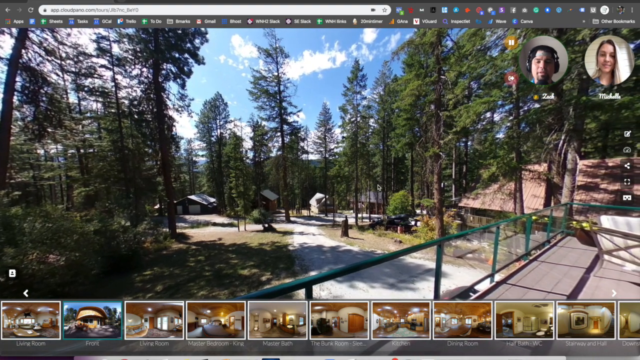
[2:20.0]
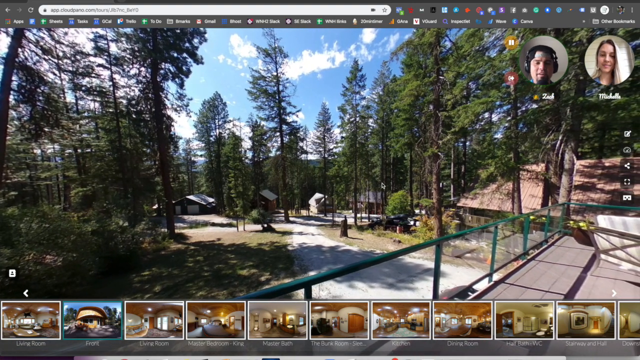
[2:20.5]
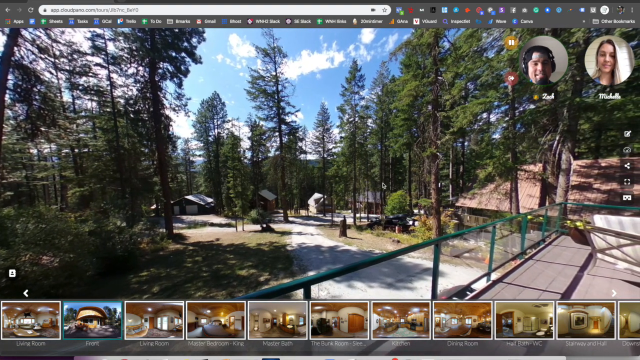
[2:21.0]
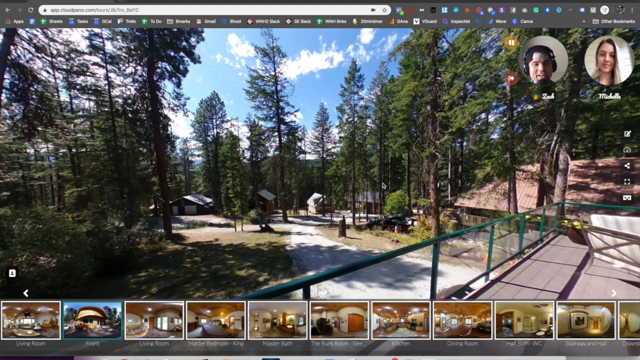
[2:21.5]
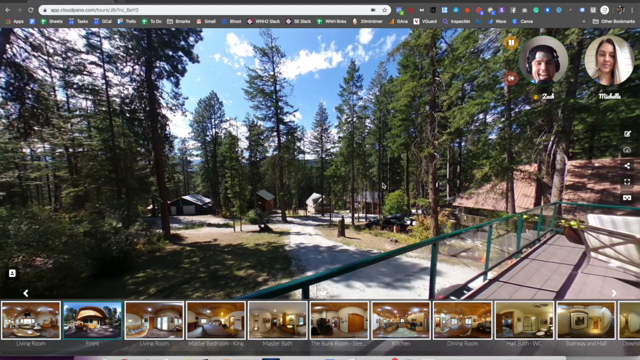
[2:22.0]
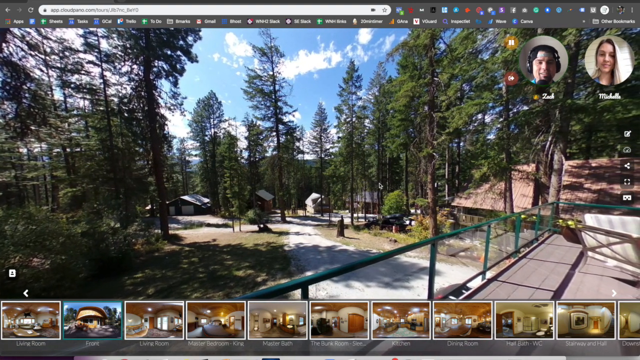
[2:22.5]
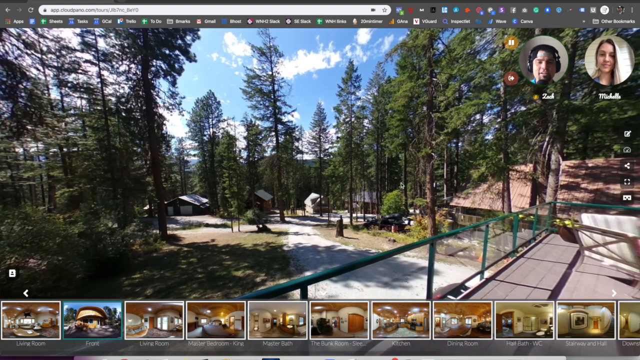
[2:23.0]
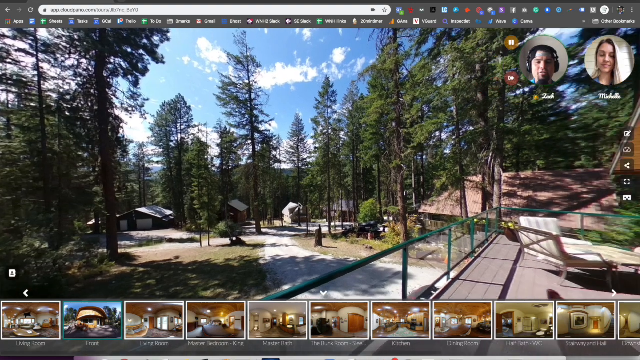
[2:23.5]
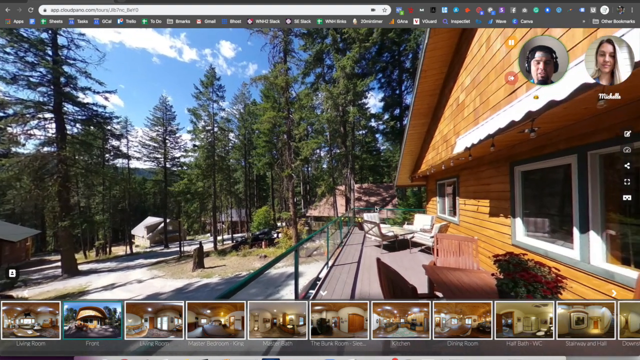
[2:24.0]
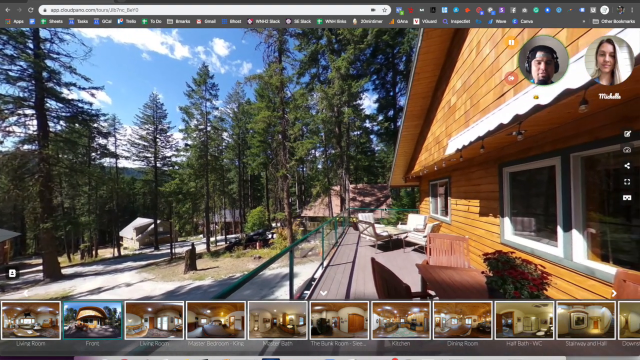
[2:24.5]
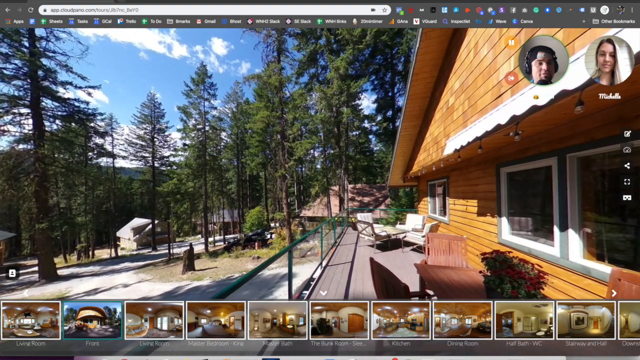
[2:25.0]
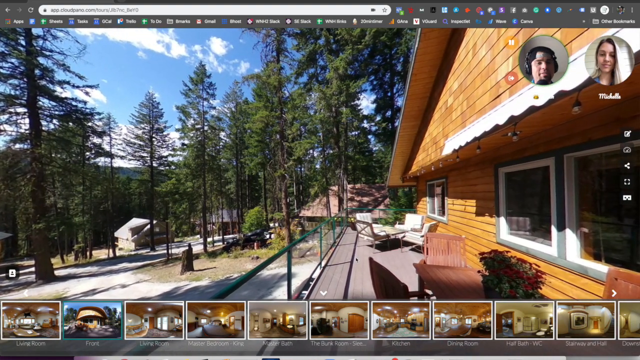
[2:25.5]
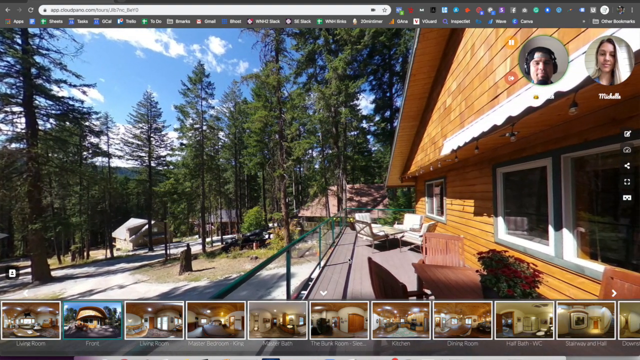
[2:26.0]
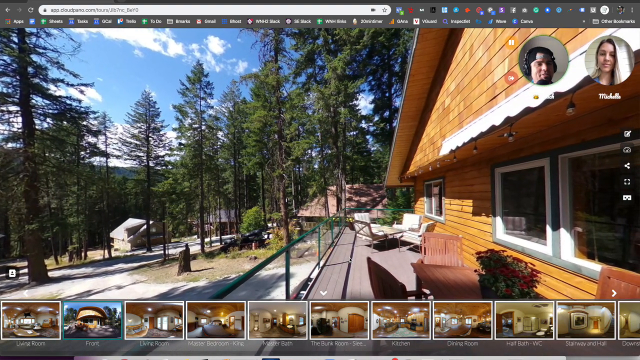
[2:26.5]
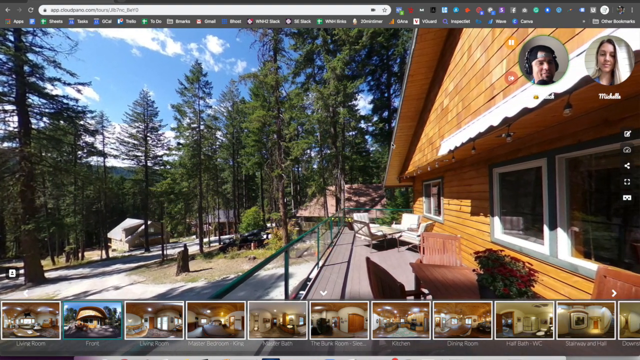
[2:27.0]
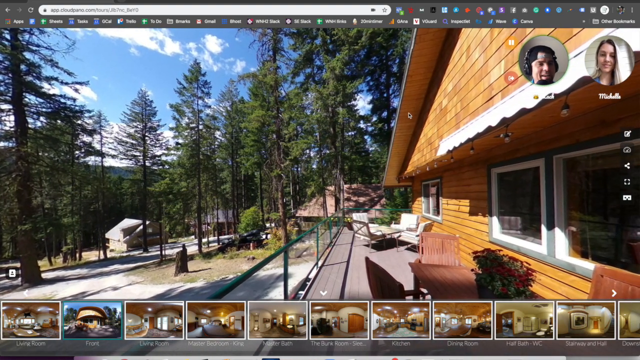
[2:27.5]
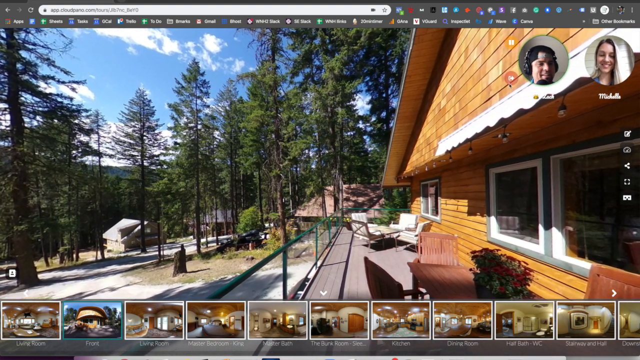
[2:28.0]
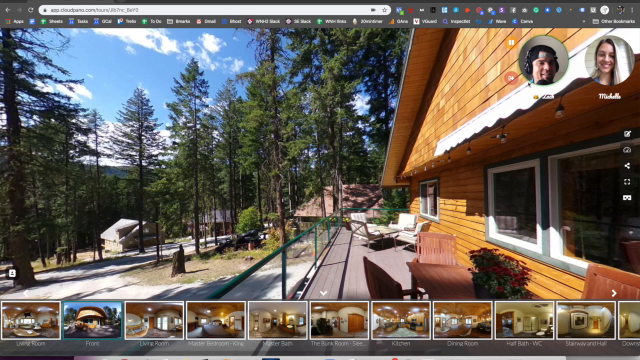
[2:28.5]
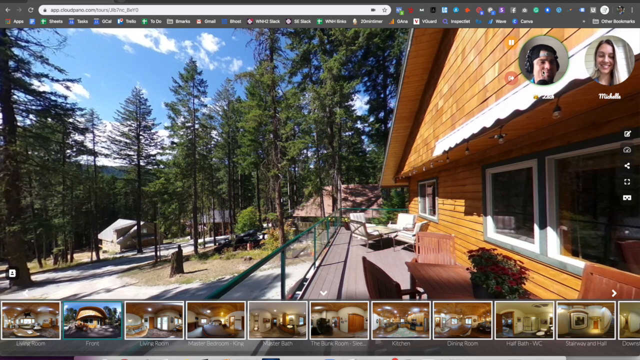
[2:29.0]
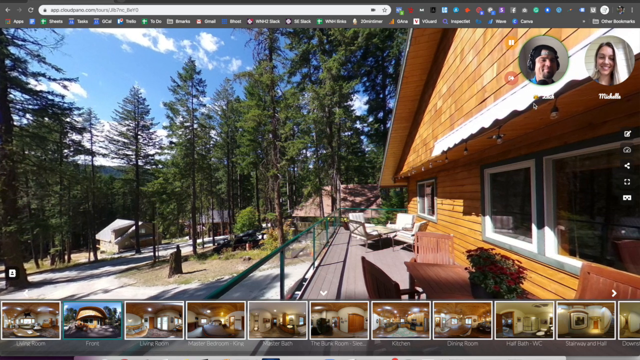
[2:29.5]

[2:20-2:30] A virtual reality game is being played by a man named Zach and a woman named Michelle, whose pictures are in the upper right-hand corner of the game. The view is outside on a porch area of the house. At least five or six, maybe more, neighboring houses are in the background off in the distance, with just their roofs and a few details of each visible. At the bottom is the scroller showing all the different rooms that can be clicked. The house has windows on the outside, and there is a table. Zach is wearing headphones, while no headphones are visible on the girl.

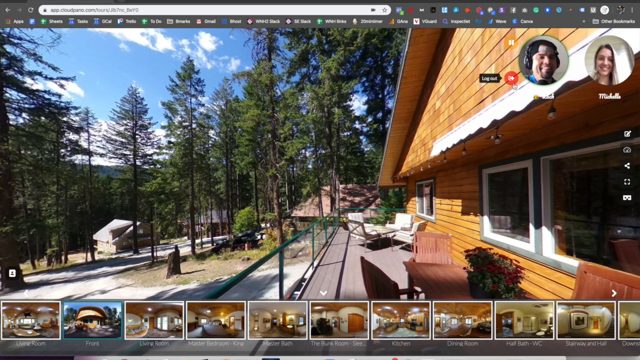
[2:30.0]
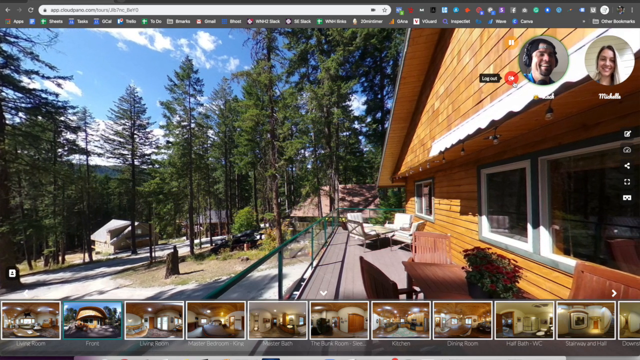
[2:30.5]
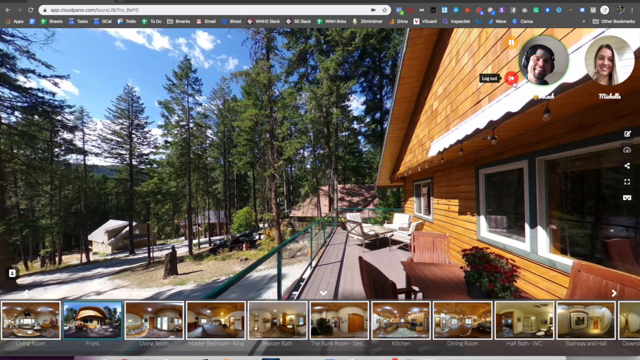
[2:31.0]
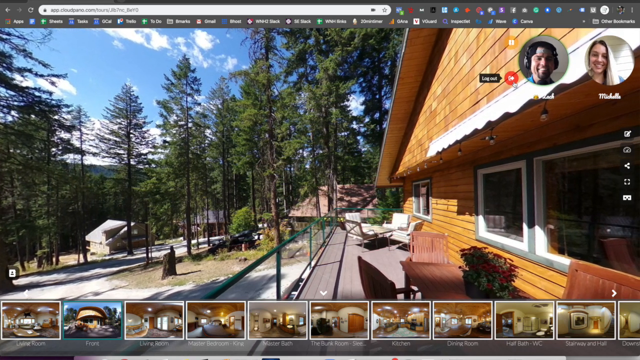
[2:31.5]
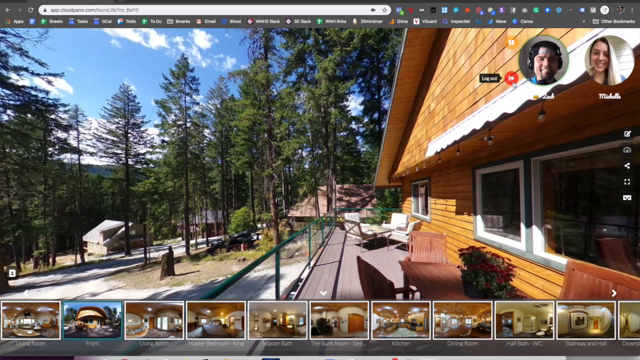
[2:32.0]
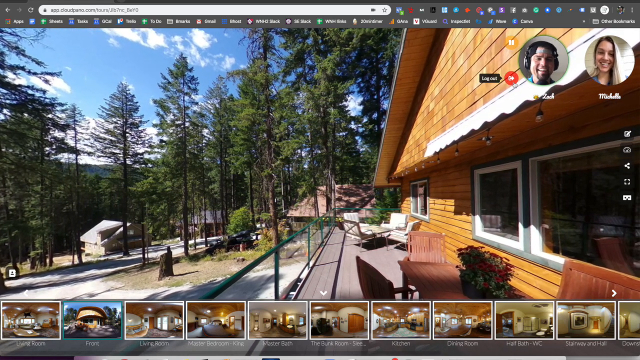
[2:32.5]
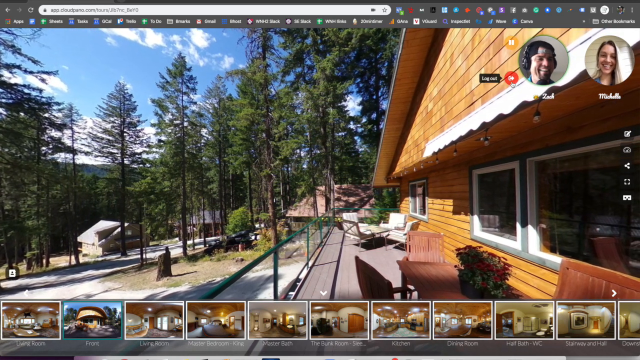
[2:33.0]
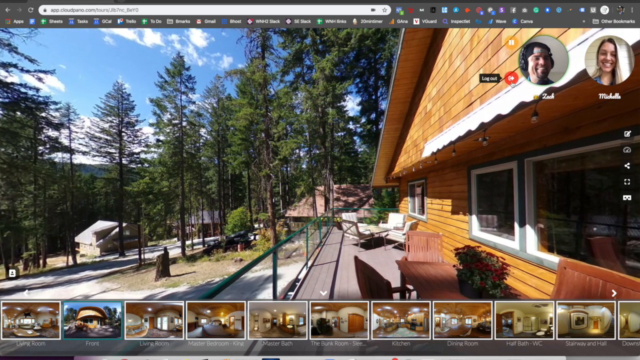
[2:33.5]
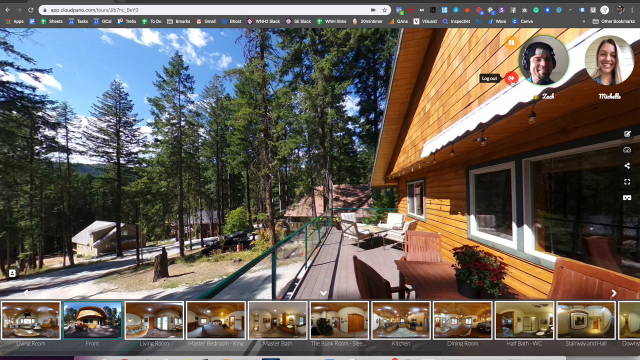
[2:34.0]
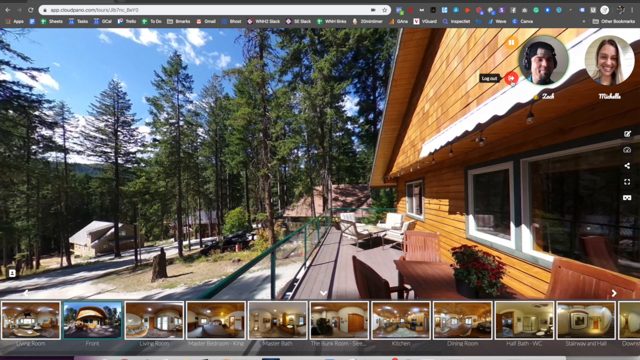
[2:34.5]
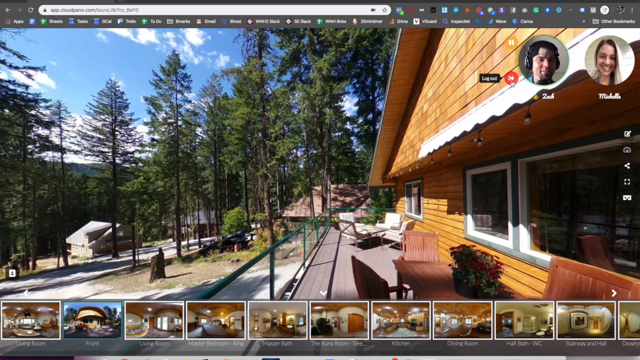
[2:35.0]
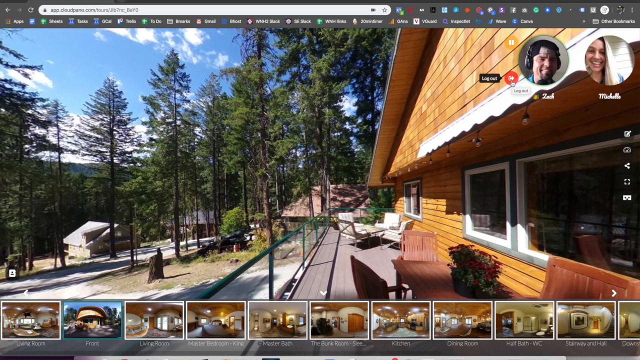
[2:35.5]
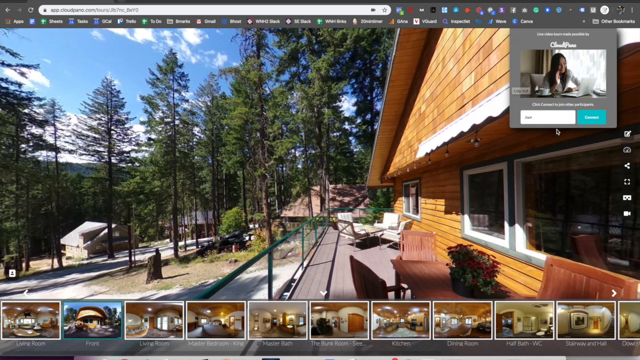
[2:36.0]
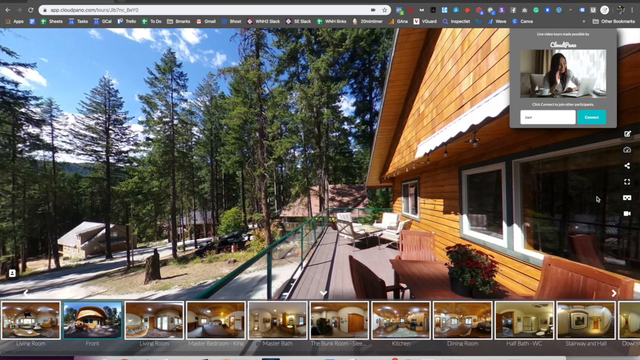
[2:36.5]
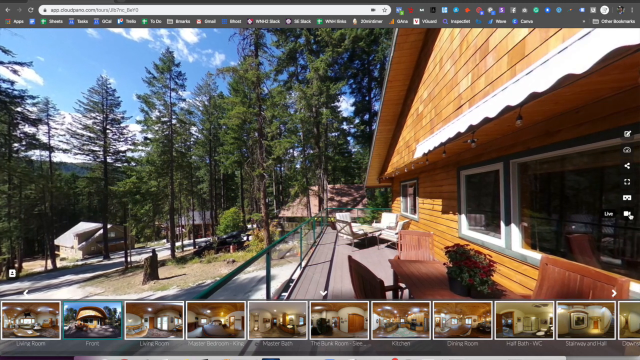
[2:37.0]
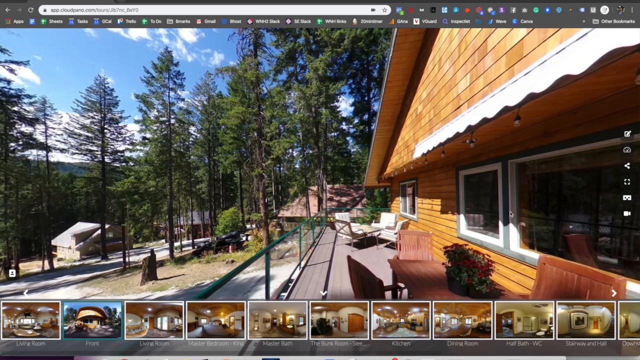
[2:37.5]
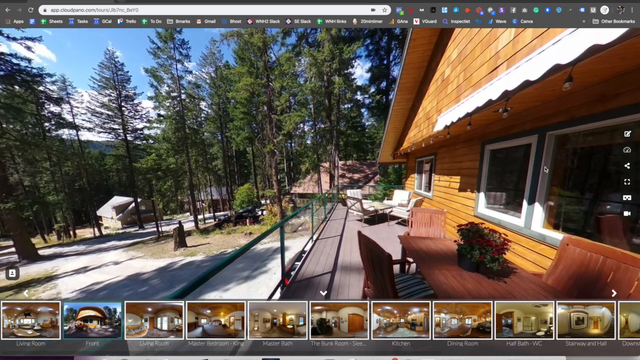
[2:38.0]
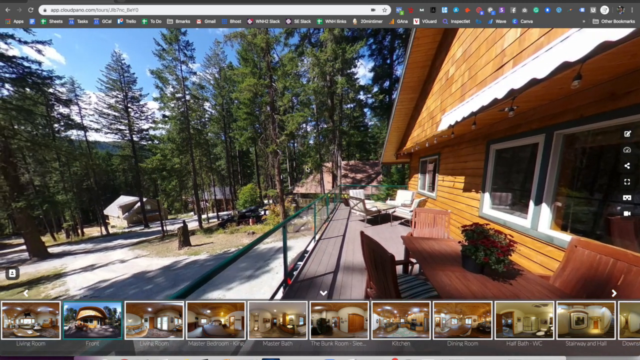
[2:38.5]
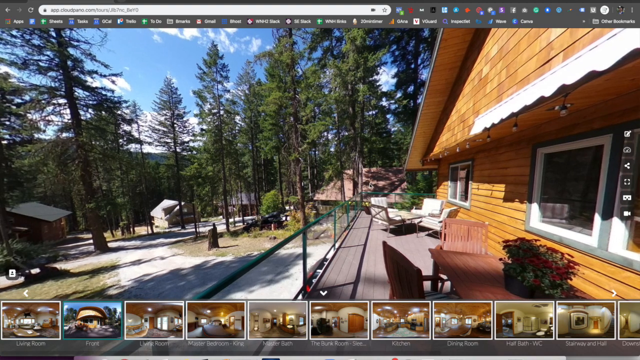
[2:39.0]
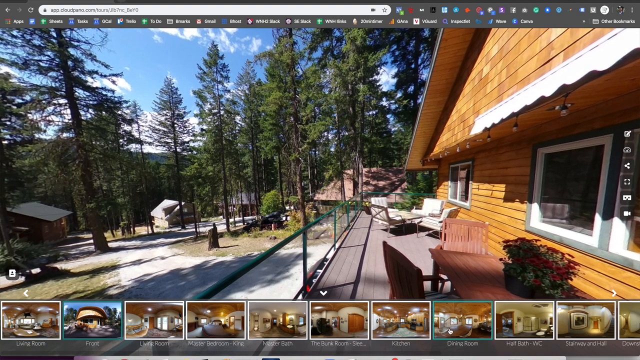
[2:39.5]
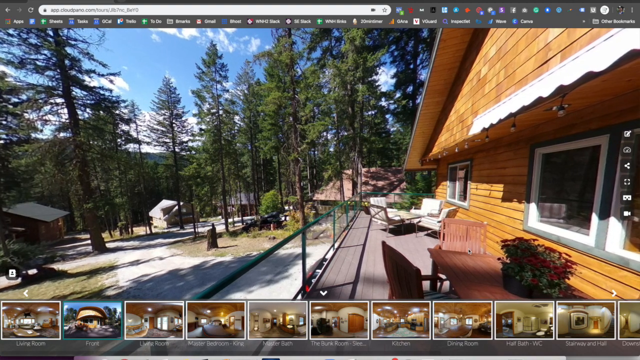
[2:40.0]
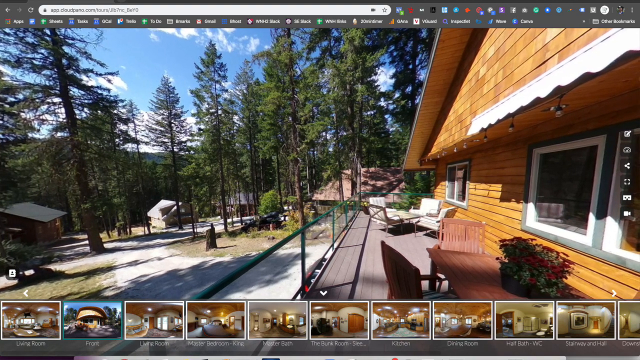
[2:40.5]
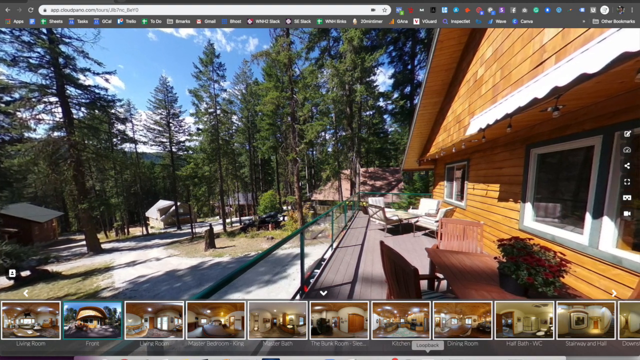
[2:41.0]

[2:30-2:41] A virtual reality game is going on on a computer screen, played by two individuals, Zach and Michelle, whose pictures are in the upper right-hand corner. The outdoors of kind of a log cabin-like area in the woods is shown, with a lot of pine trees around. As Zach and Michelle talk, their heads move in their circles. He shows buttons that can be pushed, including a red one that says "log out," and he looks like he is about to click it, showing her how to do it. When he clicks it, a page or little square comes up in that area for logging back in, with a rectangular picture and text that appears to say "email" and "continue."